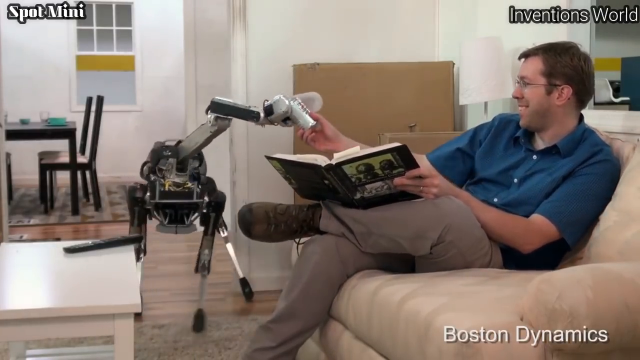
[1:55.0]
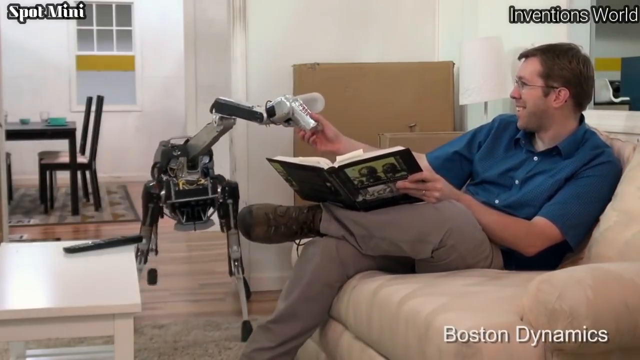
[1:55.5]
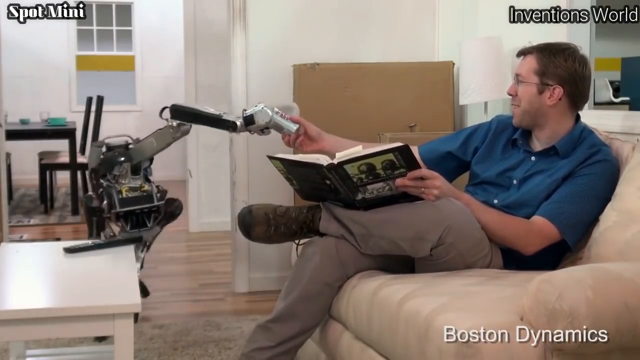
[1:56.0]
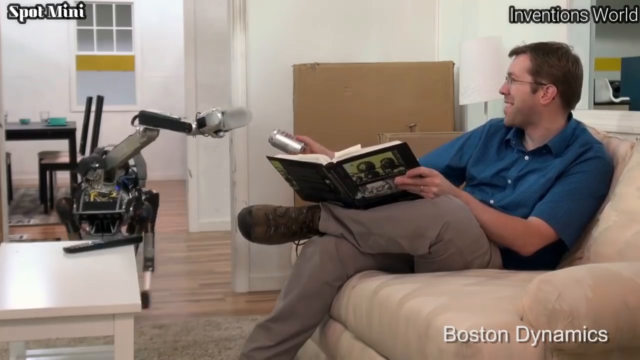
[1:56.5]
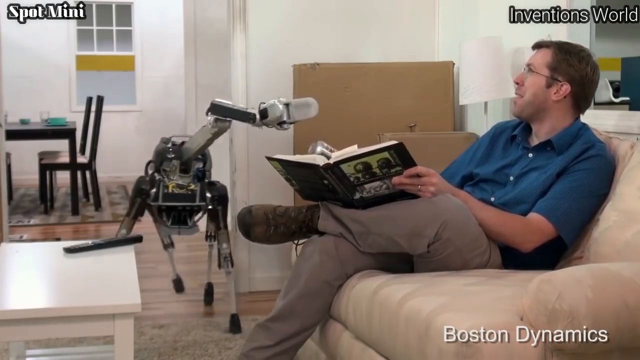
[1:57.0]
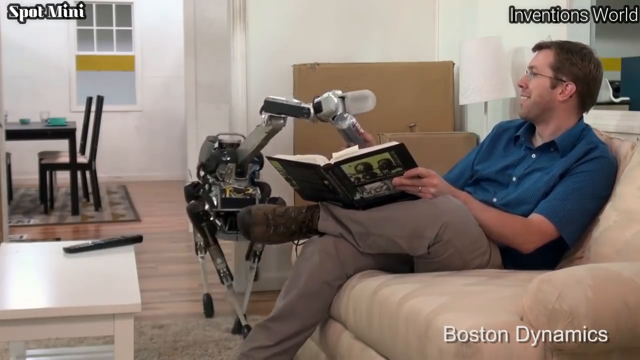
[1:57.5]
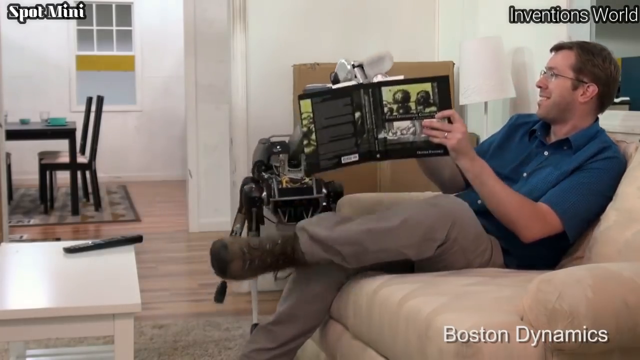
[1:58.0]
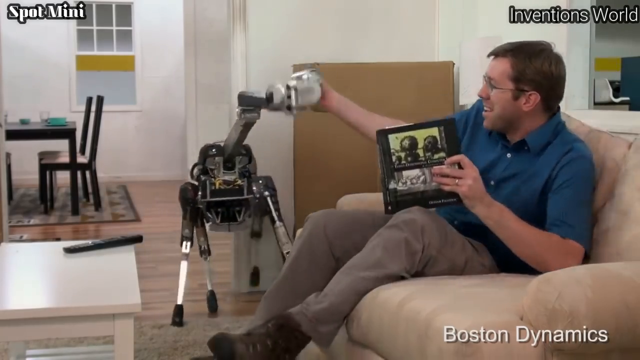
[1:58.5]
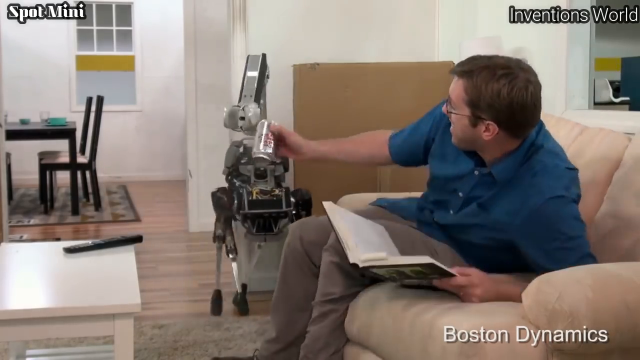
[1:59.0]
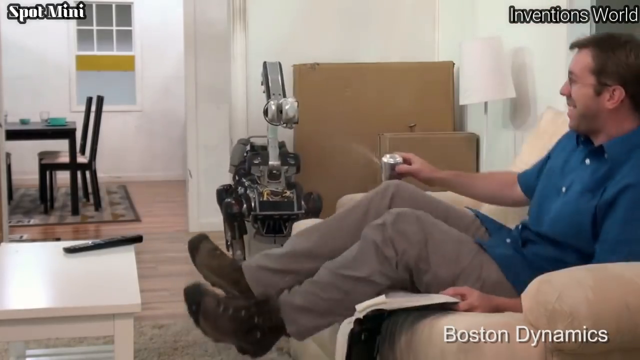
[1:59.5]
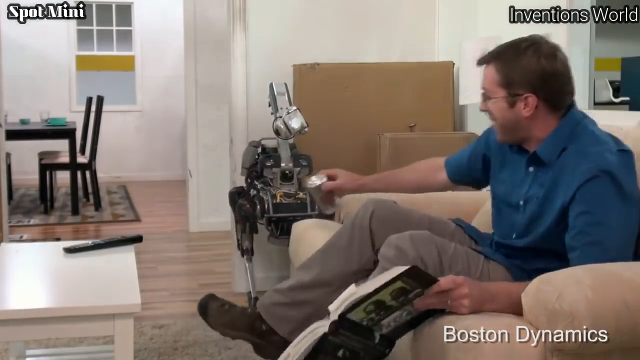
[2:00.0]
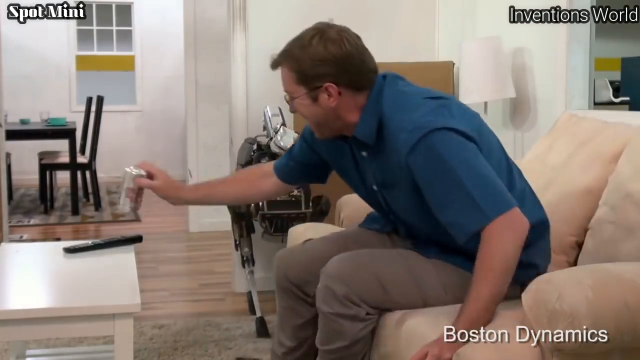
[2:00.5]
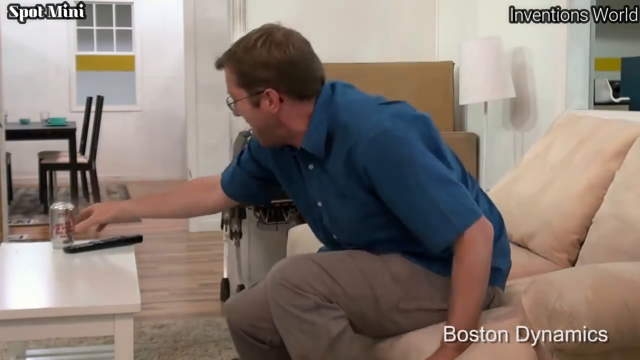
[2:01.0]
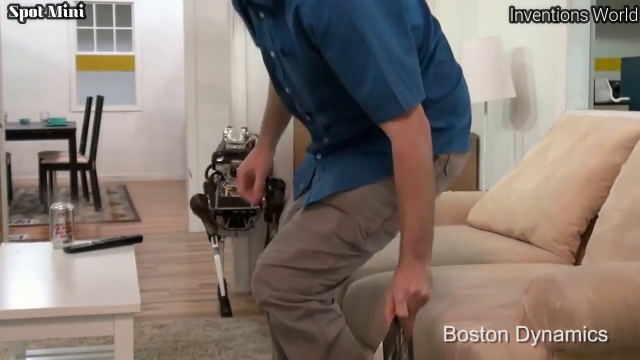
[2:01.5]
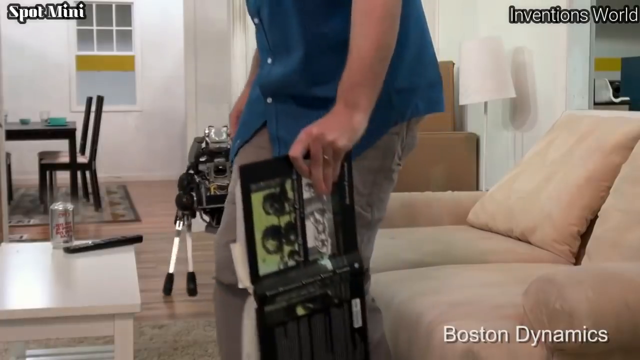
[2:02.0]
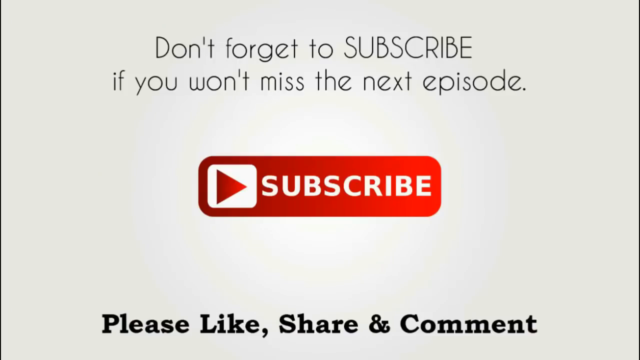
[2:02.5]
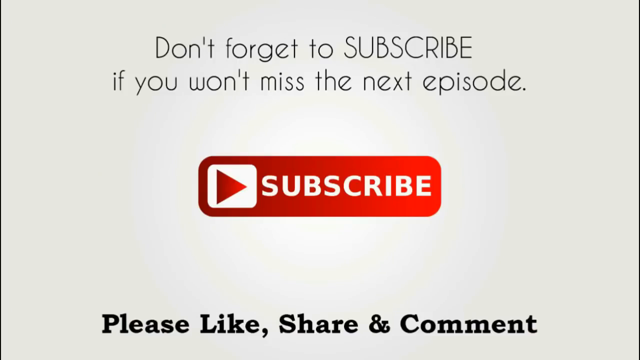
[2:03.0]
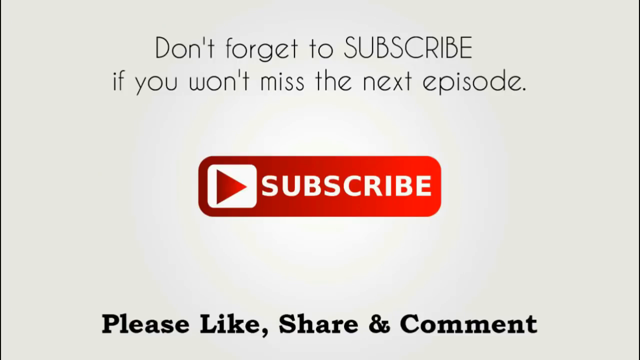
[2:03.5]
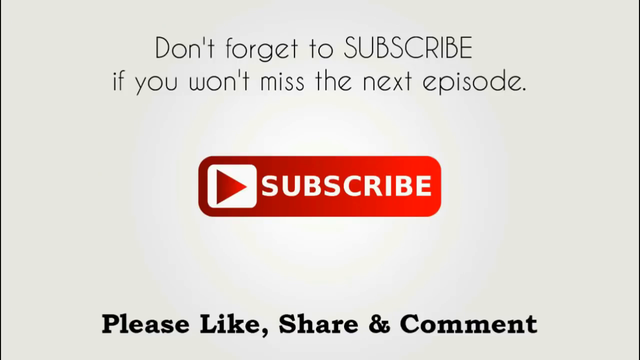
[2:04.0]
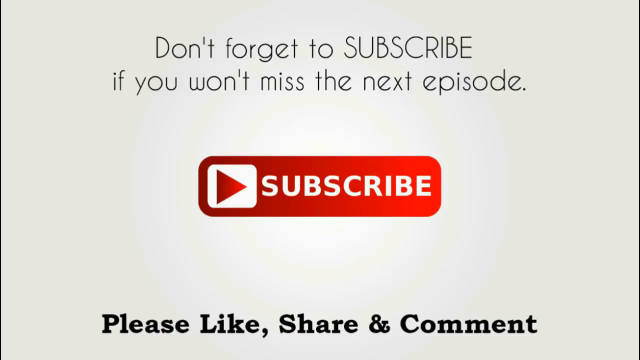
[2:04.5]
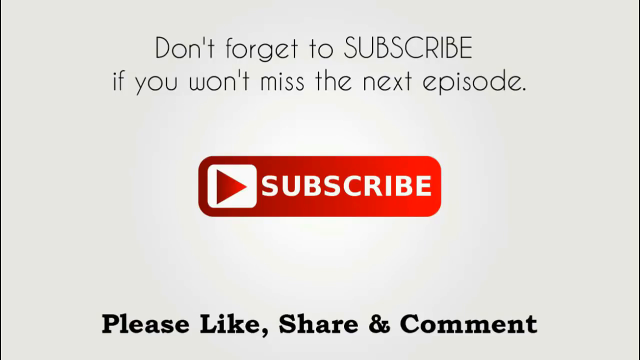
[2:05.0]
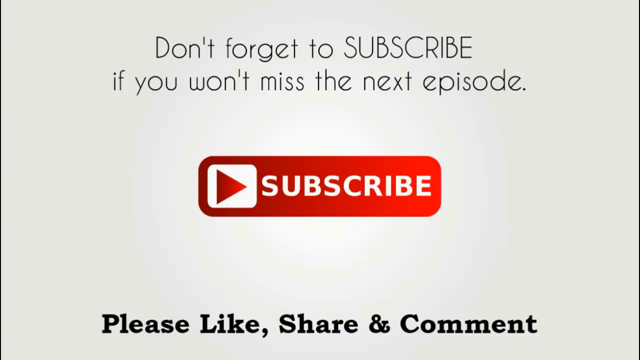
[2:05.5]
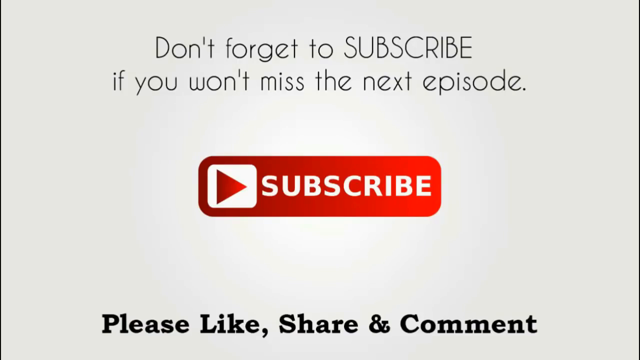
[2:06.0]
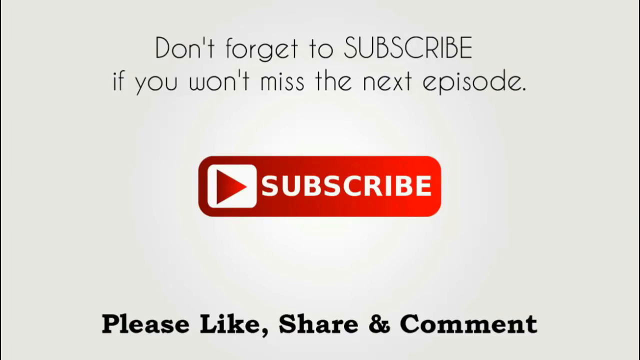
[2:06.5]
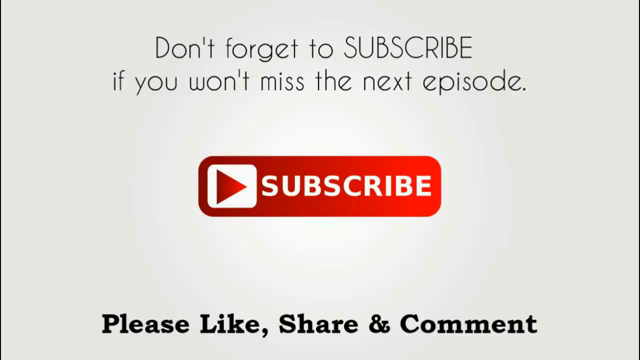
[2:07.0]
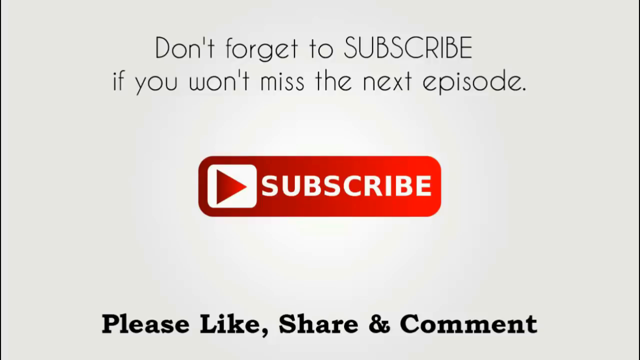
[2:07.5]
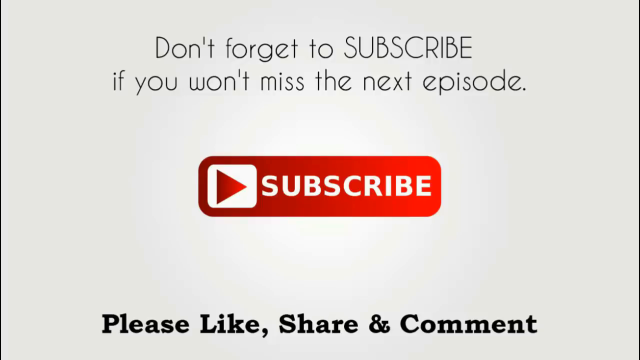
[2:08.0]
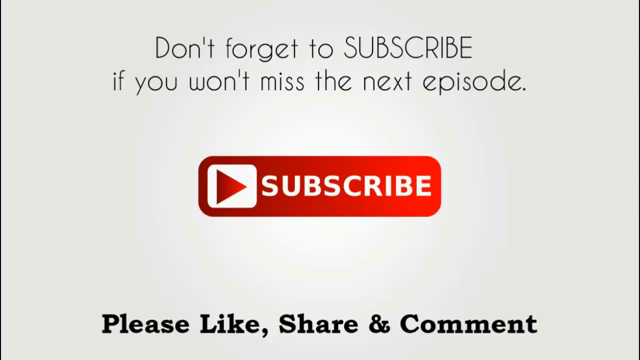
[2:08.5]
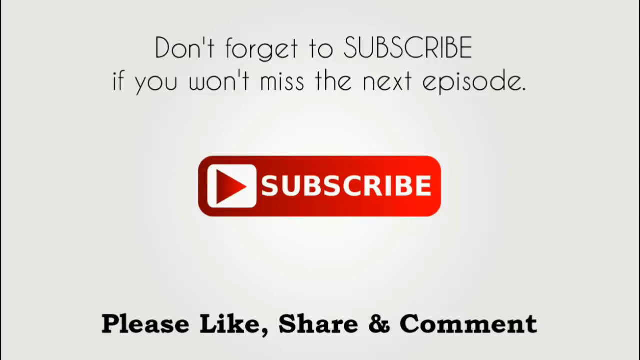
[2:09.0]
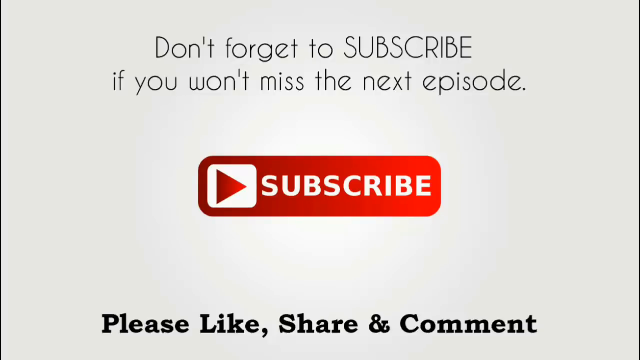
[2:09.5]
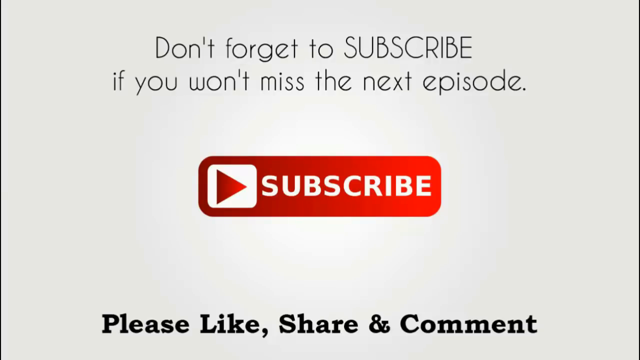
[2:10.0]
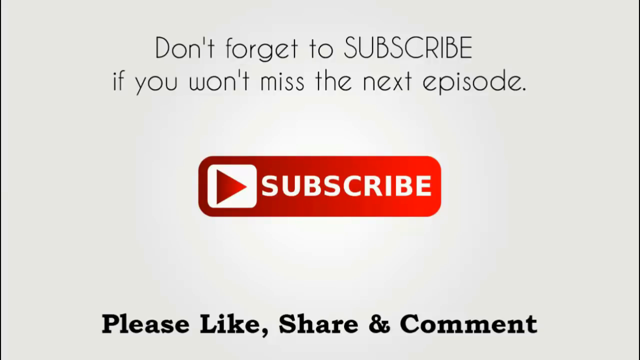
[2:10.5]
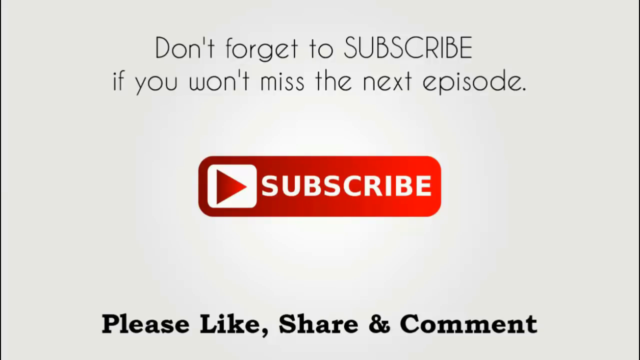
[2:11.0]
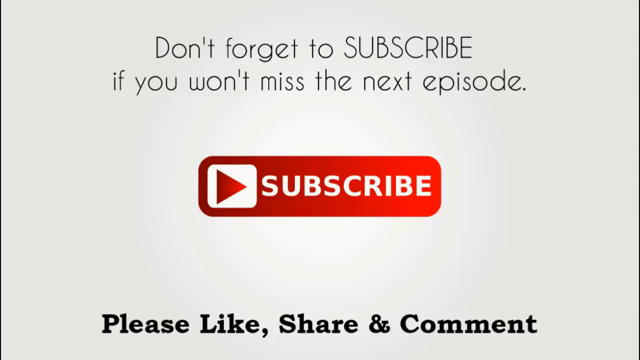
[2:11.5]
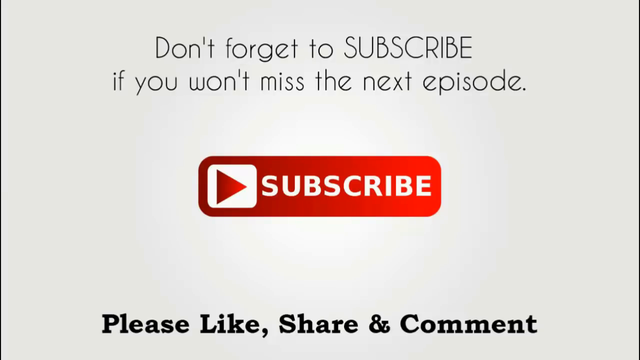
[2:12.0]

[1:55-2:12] Several video suggestions pop up. The man plays around with the robot, and it crunches a bit too hard on the can, so soda starts to spray out the side. He cracks up and moves around kind of playfully as soda sprays everywhere, then moves away, nearly drops his book, puts the can on the coffee table, and starts walking away while the robot kind of dances awkwardly in the background. The video then goes to a screen that says "don't forget to subscribe" and "don't miss the next episode", with a subscribe button in the middle and black text reading "please like, share and comment". There are three suggested videos: the top one is "smart robots", with an "AI powered companion" thumbnail showing a little robot with big googly eyes; the bottom left is "best car gadgets and accessories" with a few of those displayed; and the bottom right is "new inventions" with text that says "high converting landing page".